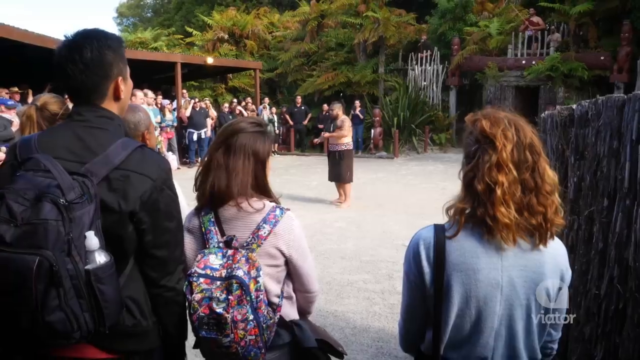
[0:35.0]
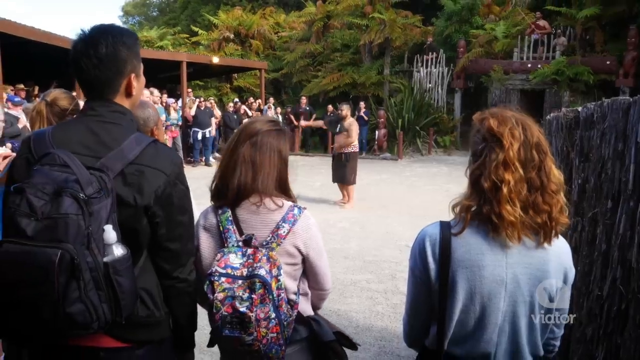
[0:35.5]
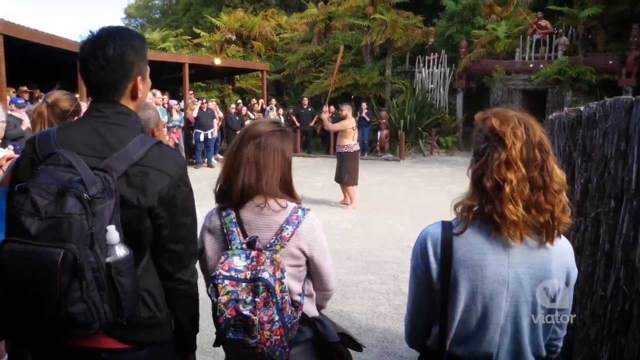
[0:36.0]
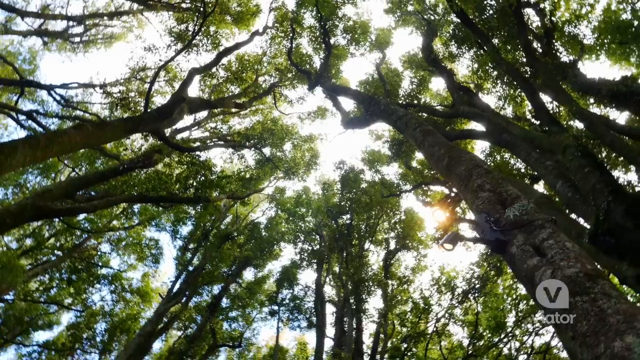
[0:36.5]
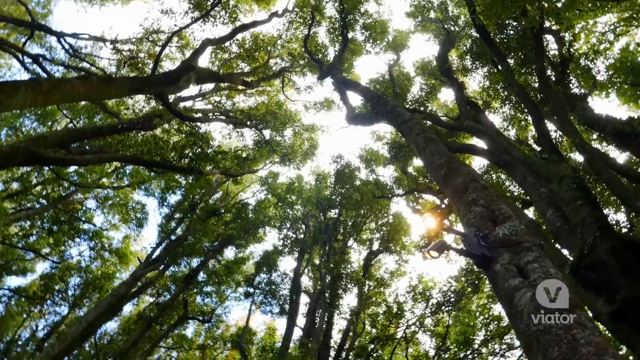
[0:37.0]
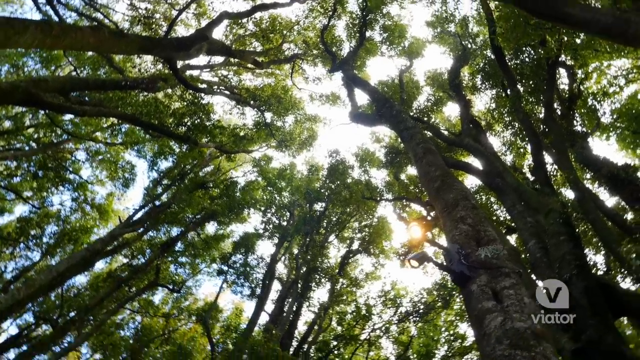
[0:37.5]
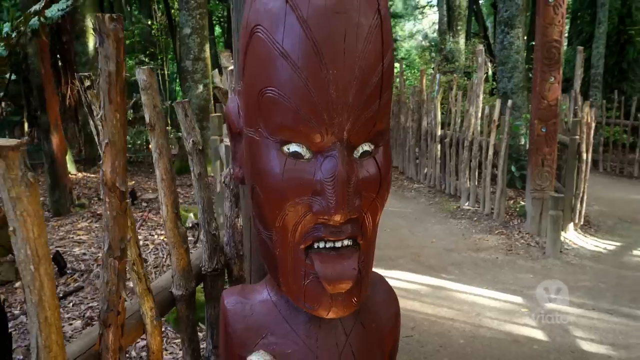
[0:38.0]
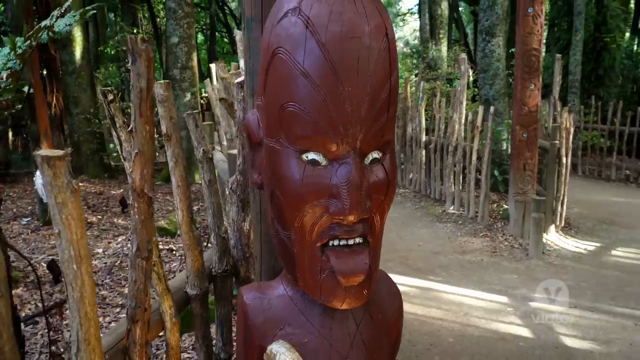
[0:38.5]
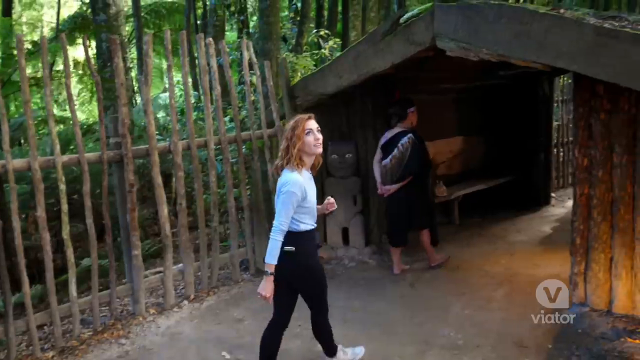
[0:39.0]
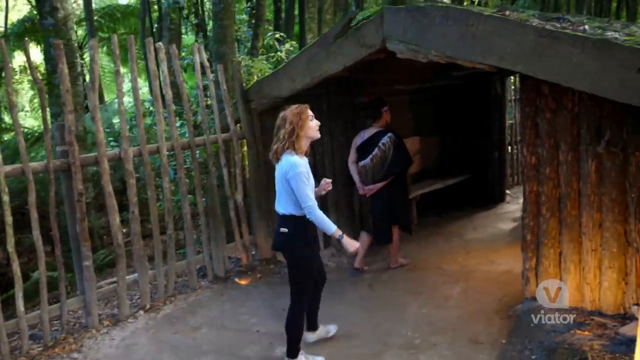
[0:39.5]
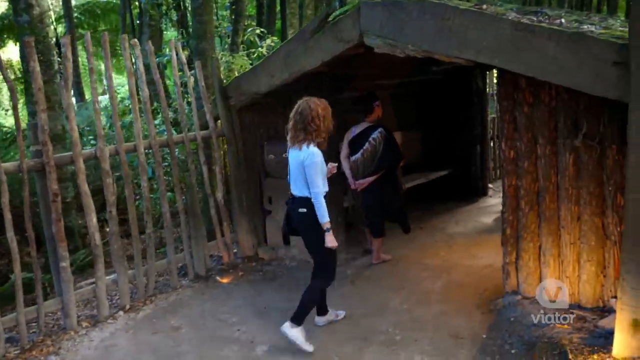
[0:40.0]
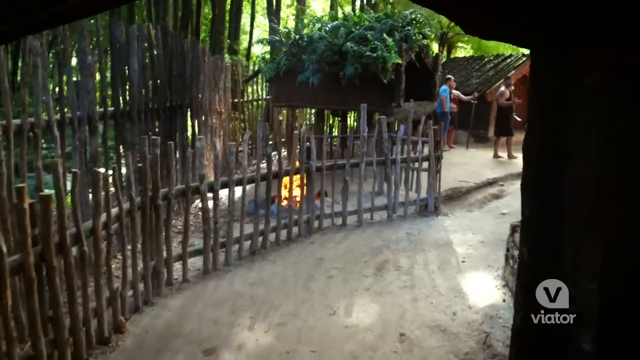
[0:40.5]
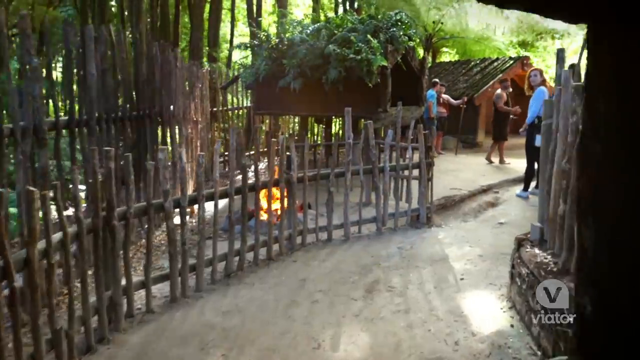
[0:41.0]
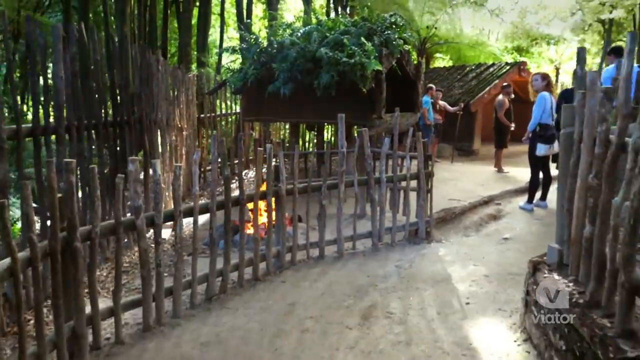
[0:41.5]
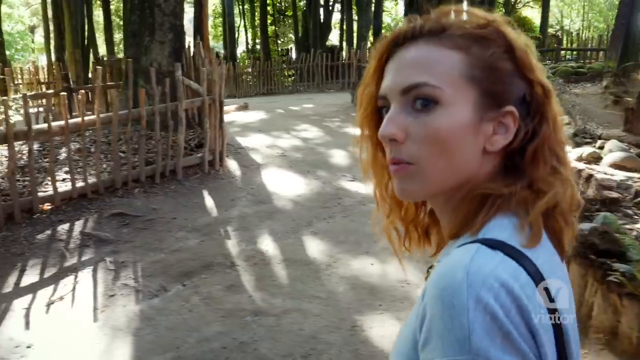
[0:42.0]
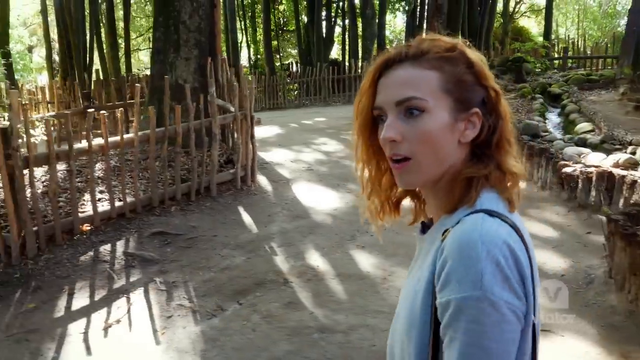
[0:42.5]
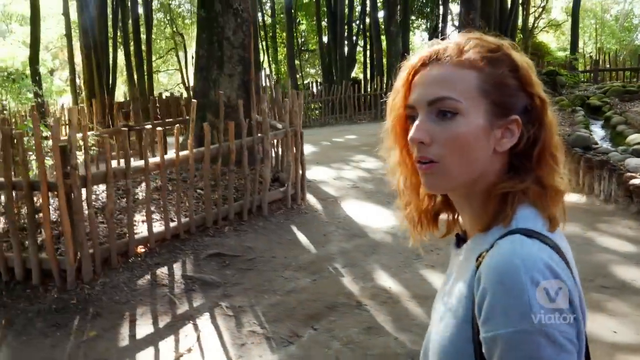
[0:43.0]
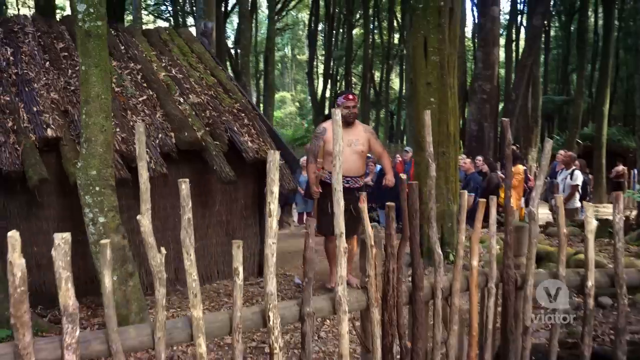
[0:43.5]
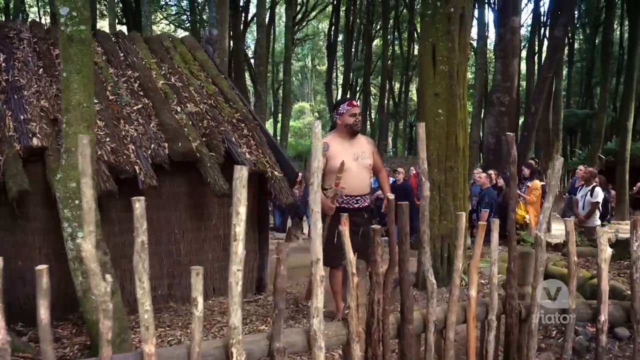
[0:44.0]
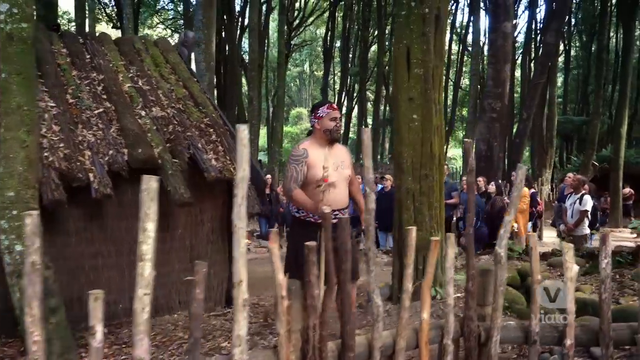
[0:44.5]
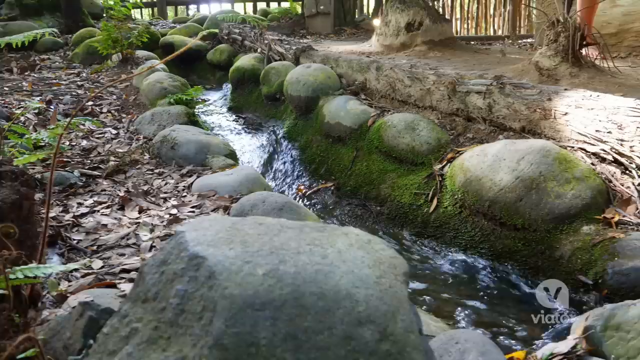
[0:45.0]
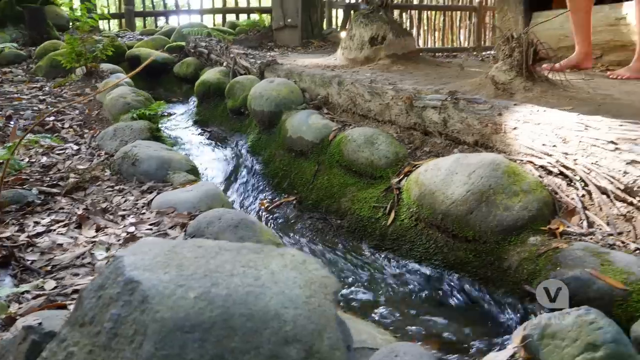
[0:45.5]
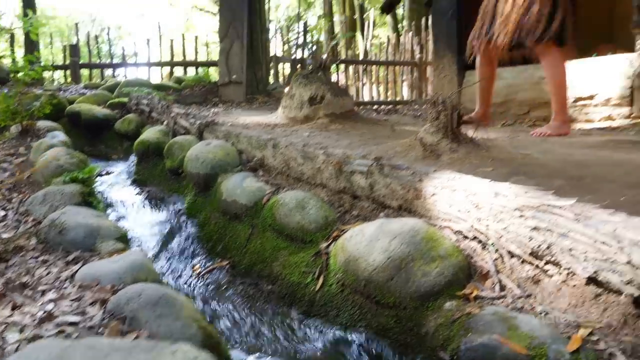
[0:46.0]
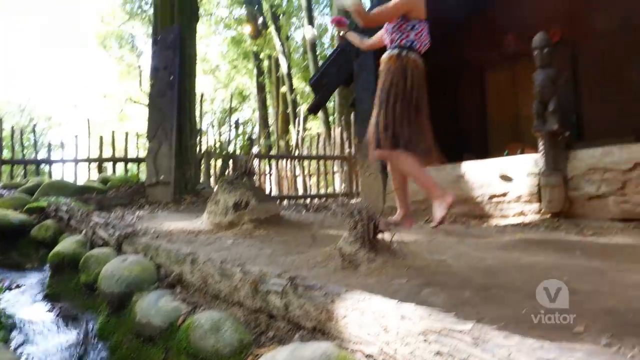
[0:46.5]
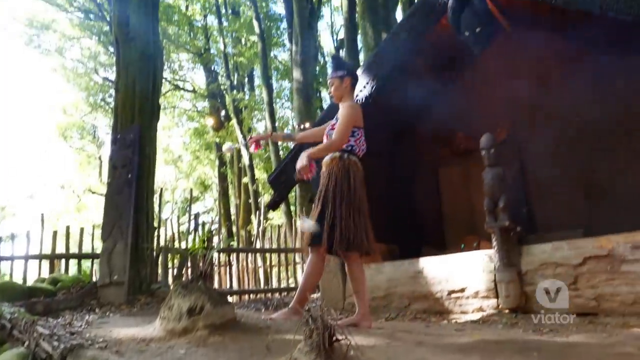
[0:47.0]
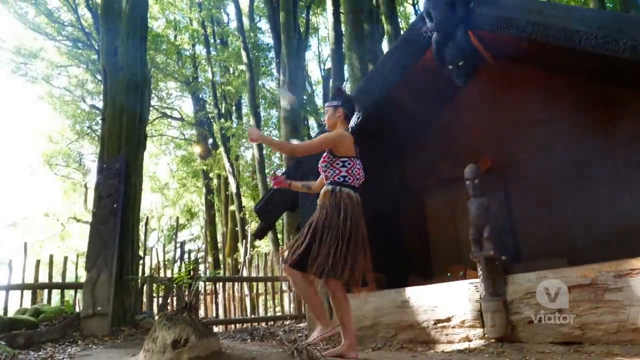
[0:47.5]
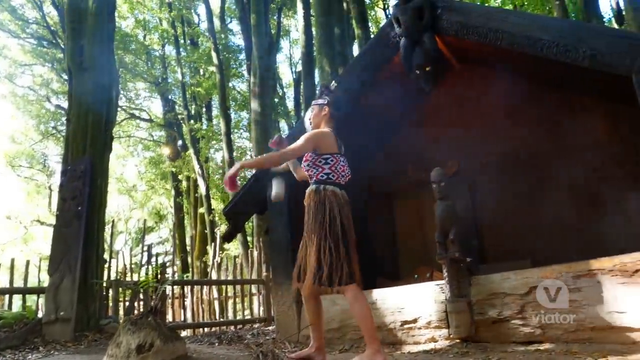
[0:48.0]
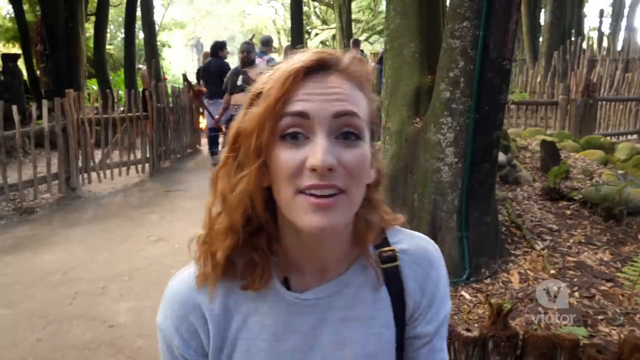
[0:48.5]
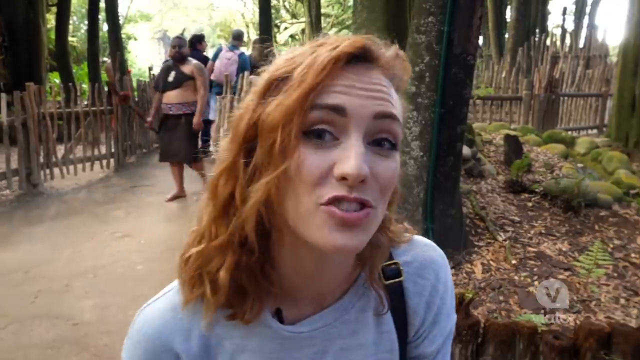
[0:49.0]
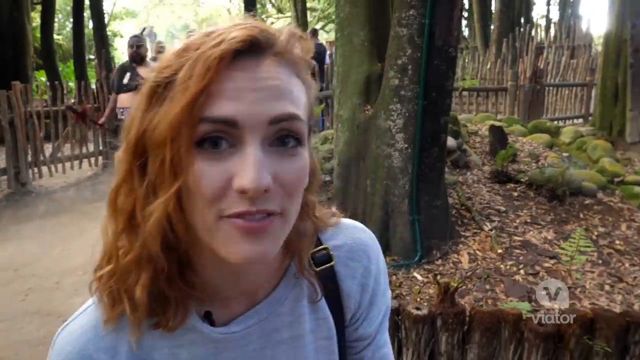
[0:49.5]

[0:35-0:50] A man is in the center of the dirt area, surrounded by a group of people watching him. The camera pans up to the trees, showing just the treetops. The host walks through the village, looking around at the different displays going on around her, and at the start she walks through some type of covering, like a tunnel. Something like a totem pole appears as she walks and talks to the camera. She sees a man with a stick, then a woman twirling the balls around, and then talks to the camera again. The camera pans down to some type of creek with running water, and other people walk around with her.